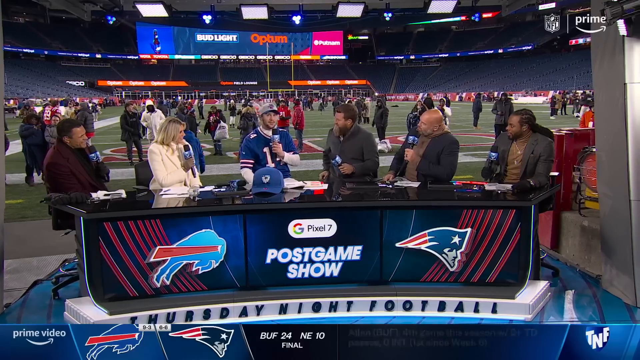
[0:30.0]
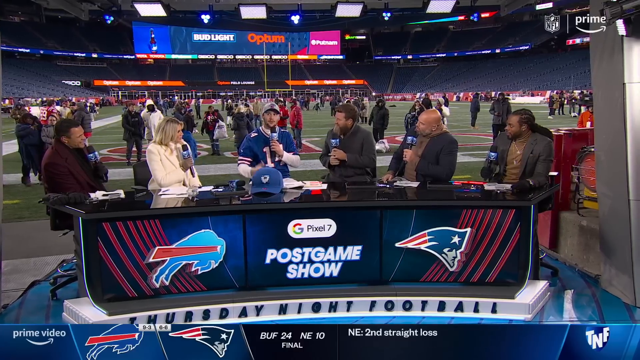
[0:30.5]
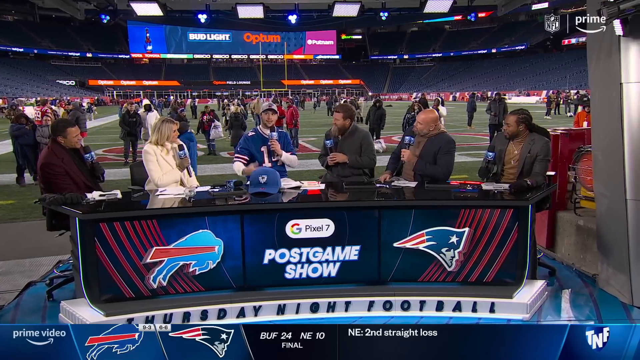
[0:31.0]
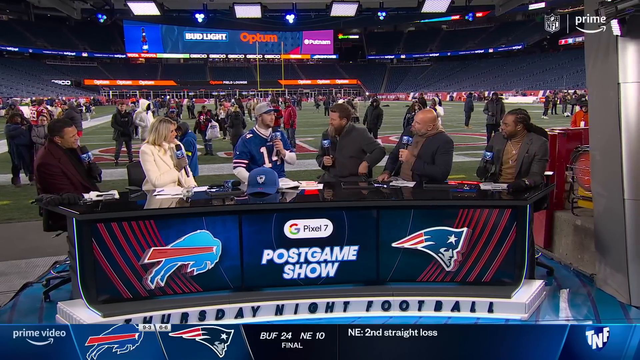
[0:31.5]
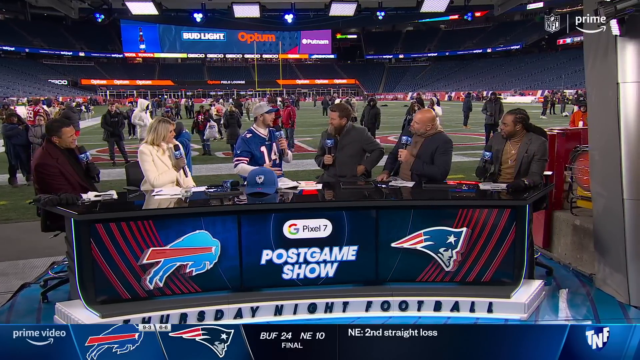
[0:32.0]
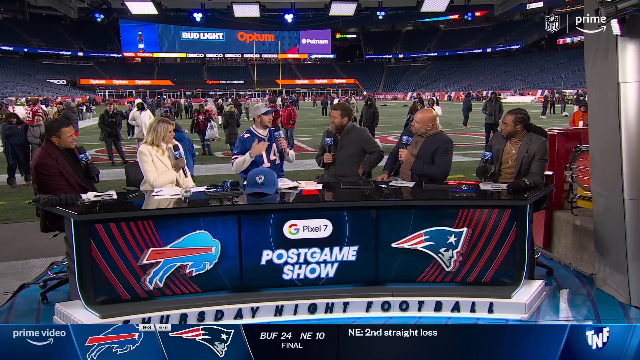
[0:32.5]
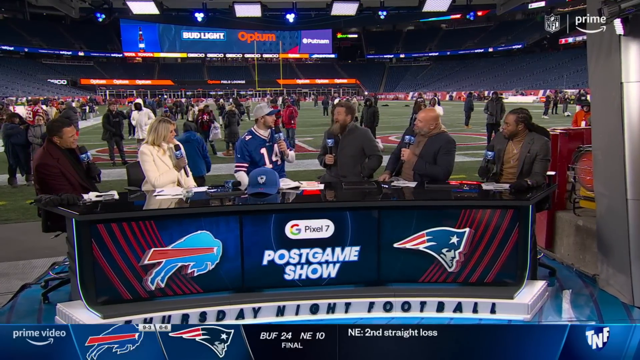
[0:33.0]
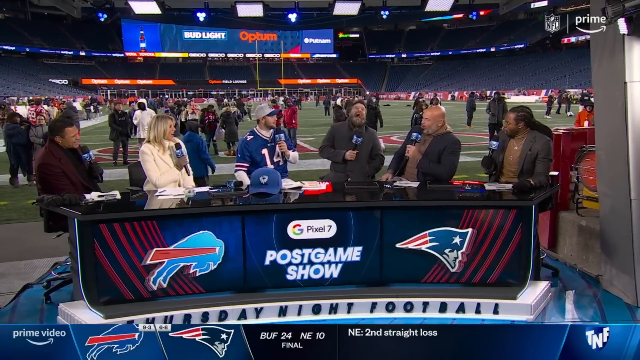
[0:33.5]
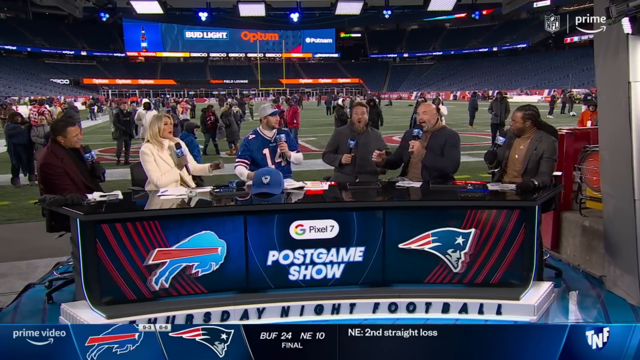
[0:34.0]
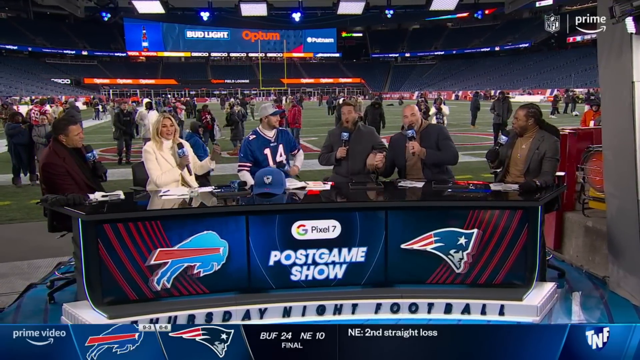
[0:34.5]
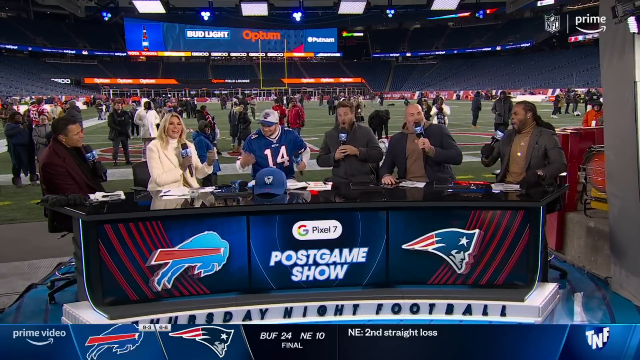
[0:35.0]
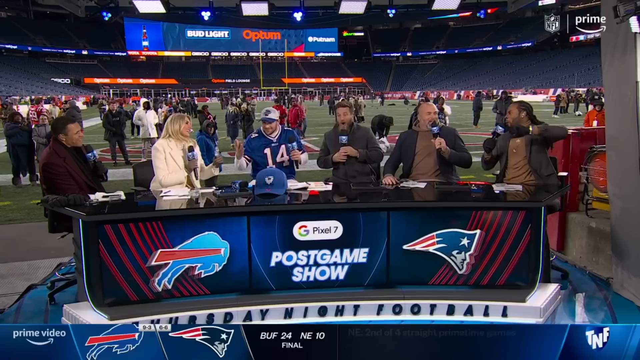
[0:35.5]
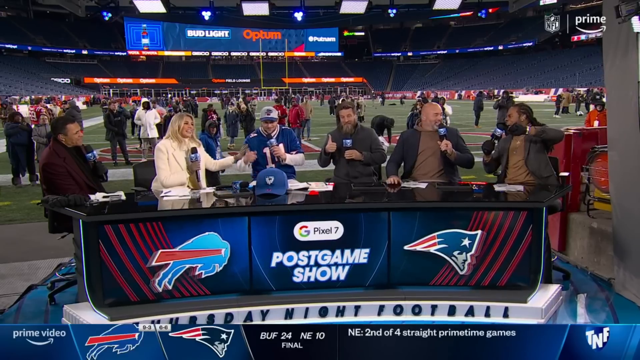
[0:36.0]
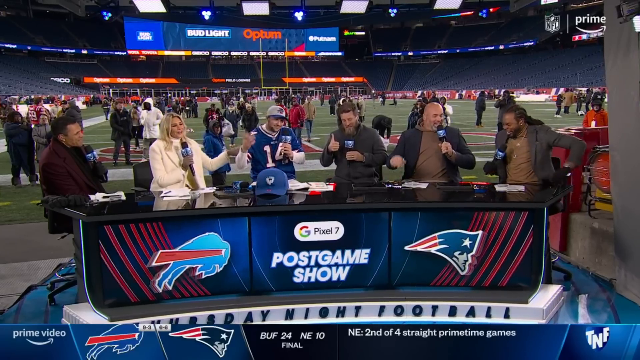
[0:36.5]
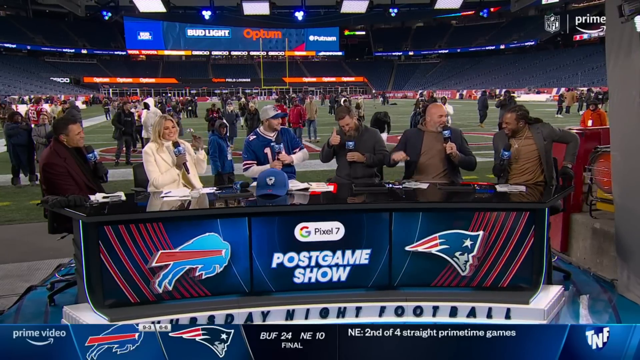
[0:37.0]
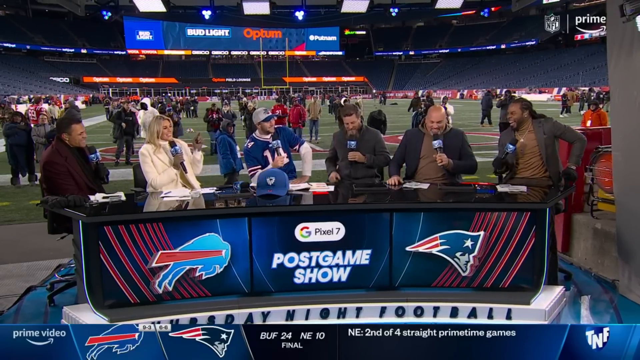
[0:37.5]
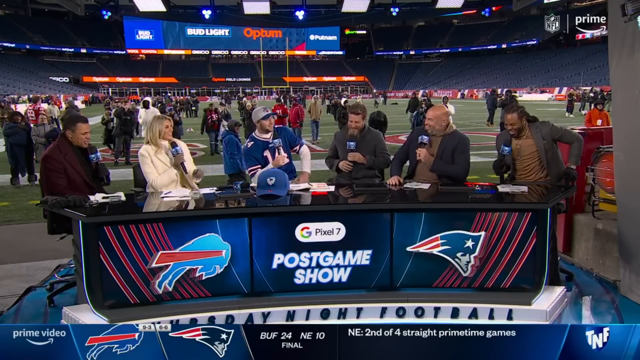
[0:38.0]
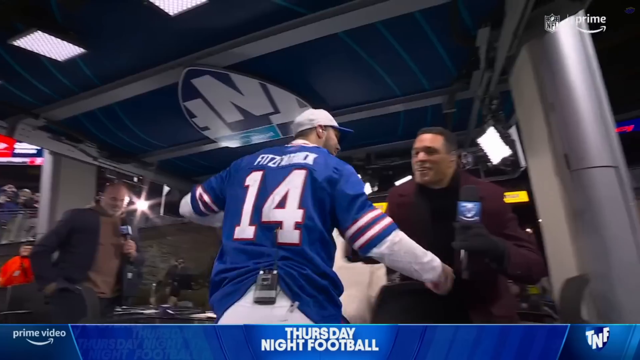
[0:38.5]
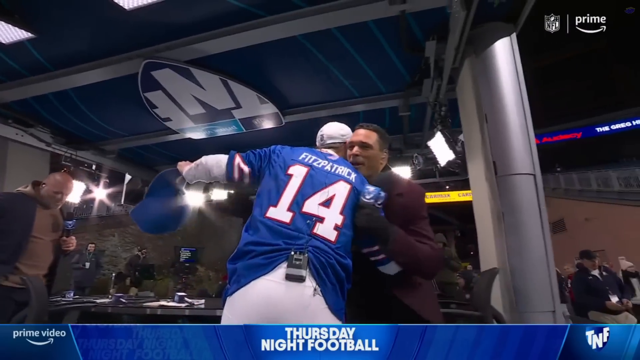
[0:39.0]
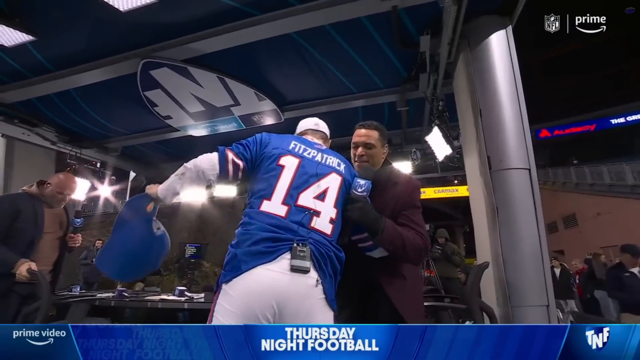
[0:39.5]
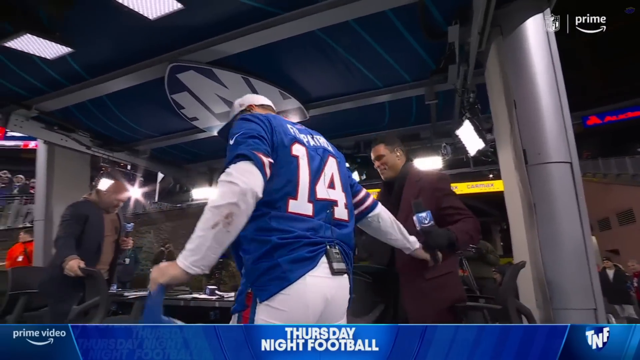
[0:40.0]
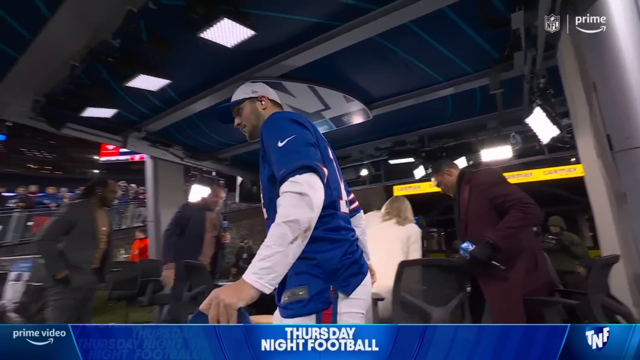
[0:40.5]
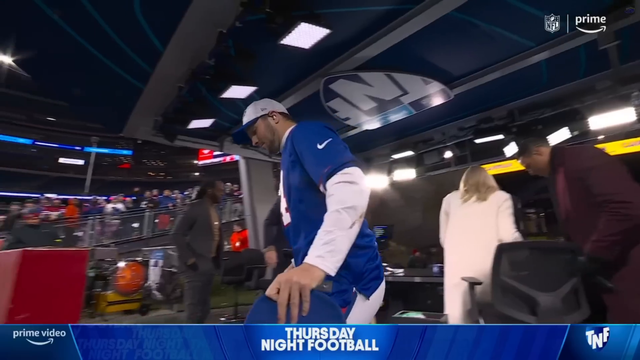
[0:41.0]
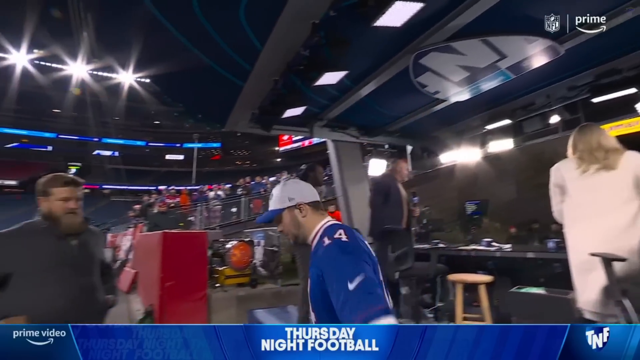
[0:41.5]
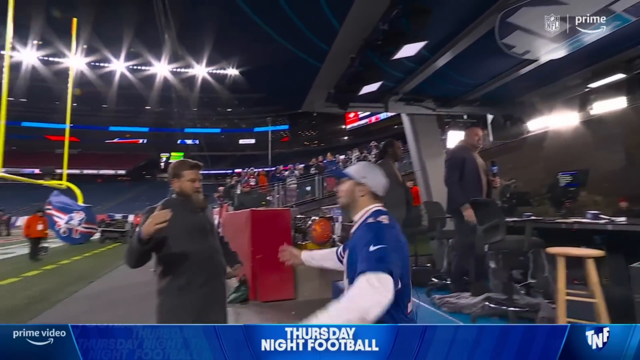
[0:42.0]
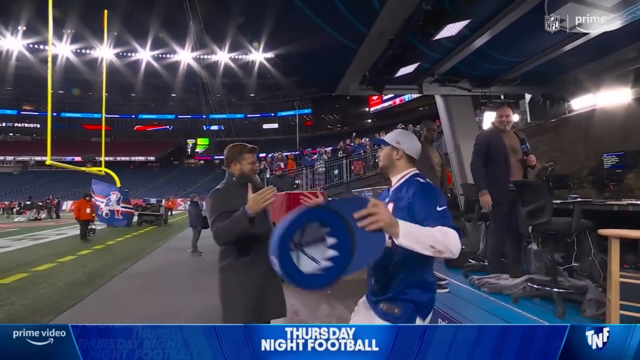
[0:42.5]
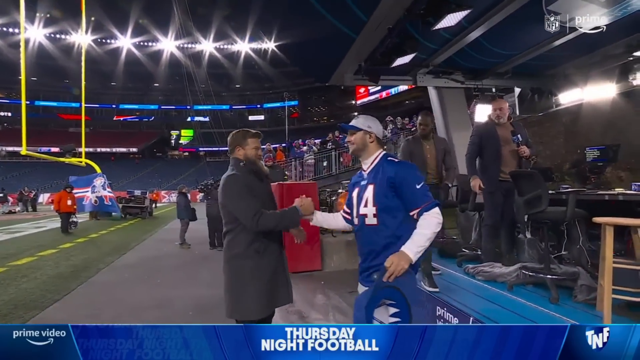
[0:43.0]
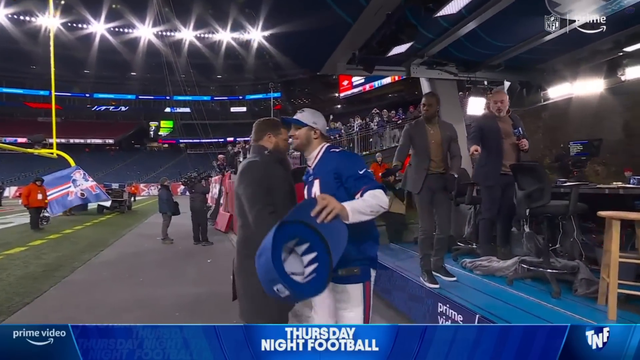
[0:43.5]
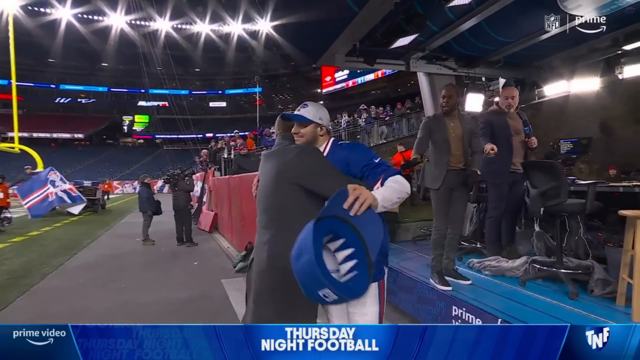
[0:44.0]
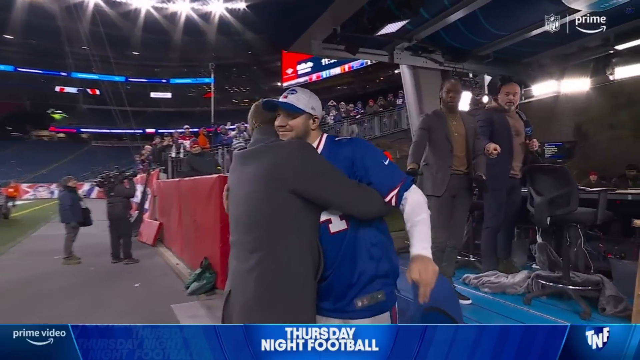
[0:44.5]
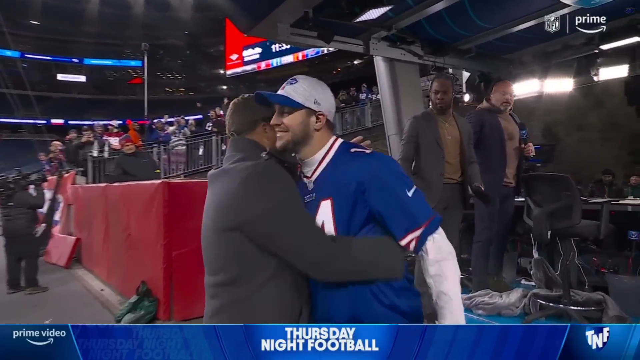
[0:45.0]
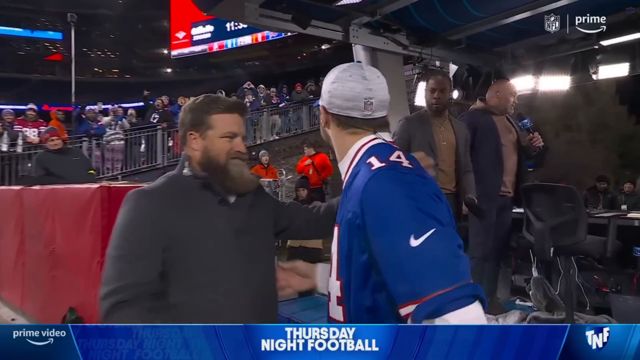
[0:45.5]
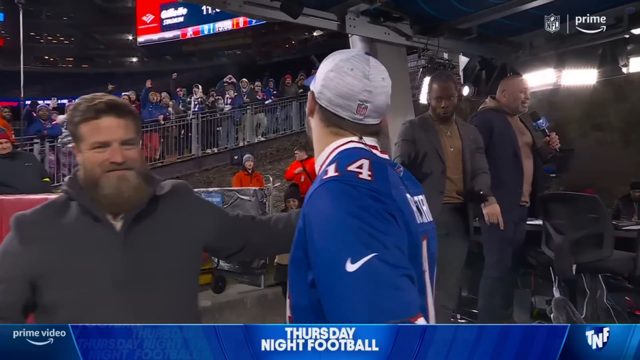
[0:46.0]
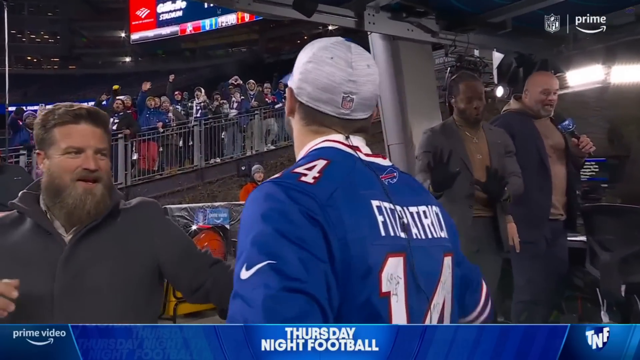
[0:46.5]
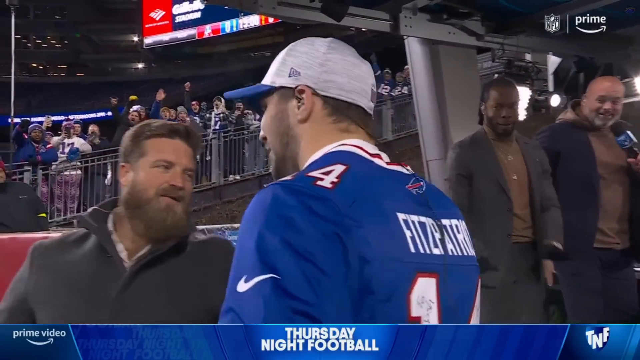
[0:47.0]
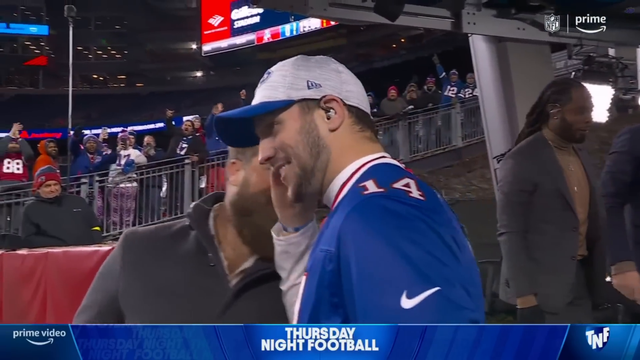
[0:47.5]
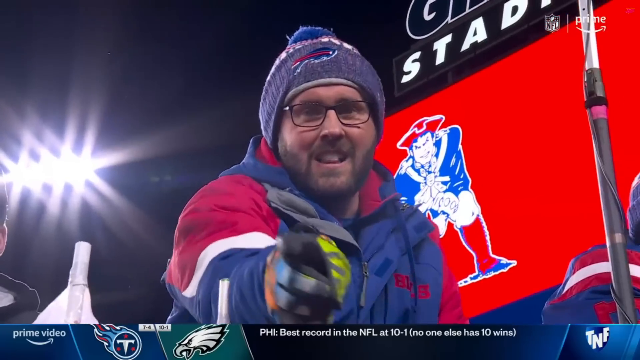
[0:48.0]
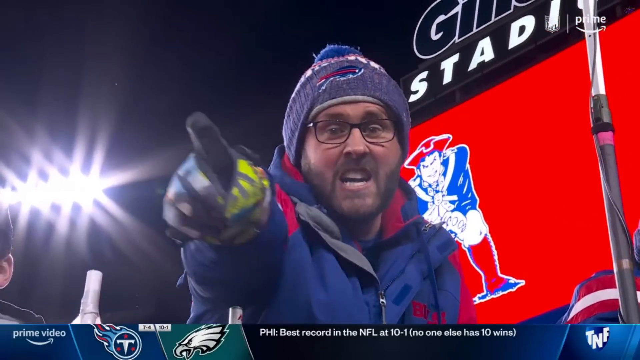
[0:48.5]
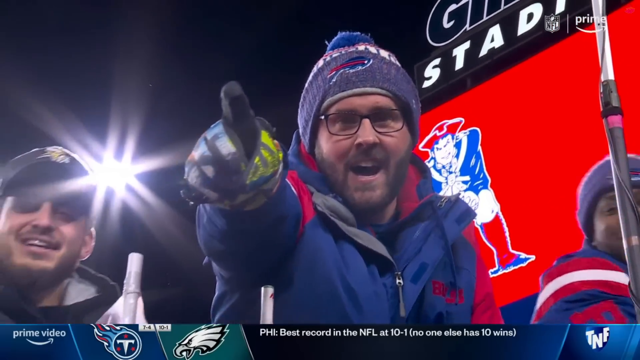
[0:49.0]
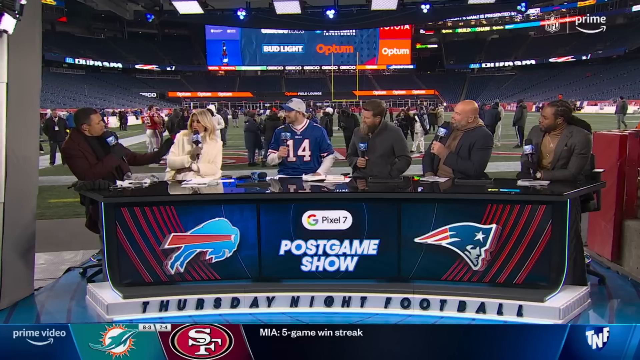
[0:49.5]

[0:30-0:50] The post-game show continues inside the stadium after the game, with the people smiling and talking joyfully with each other. The scene cuts to the player hugging what appears to be his coach and some other coaching staff. They are joyful as they hug, and he walks around with a big foam finger on his hand. His navy blue jersey has red and white detailing on the edges and a white number 14 outlined in red on the front. He walks over to the post-game show desk to begin the show. Fans in the audience give high-fives and look happy and excited. One fan wears a warm winter cap and warm clothes, suggesting it is cold outside.